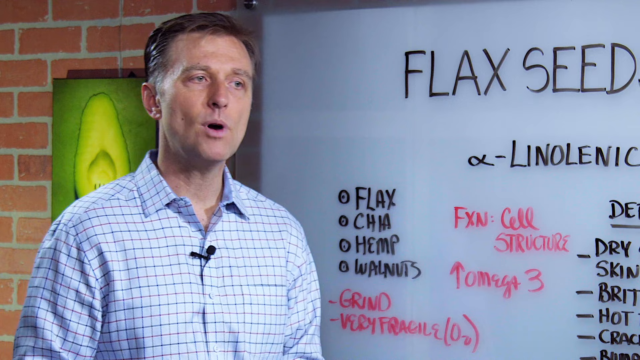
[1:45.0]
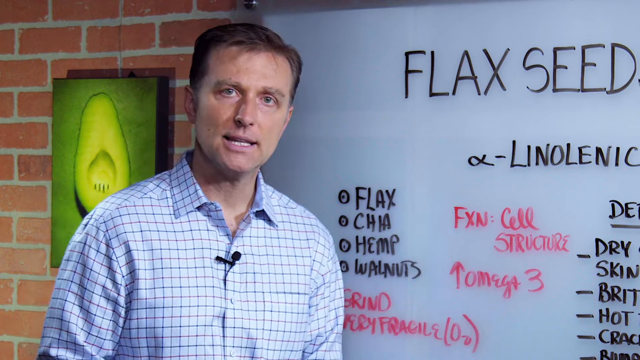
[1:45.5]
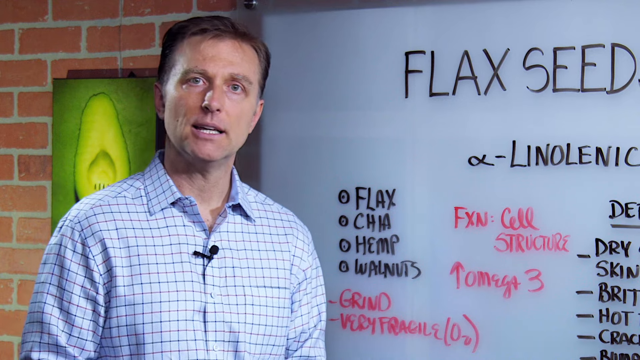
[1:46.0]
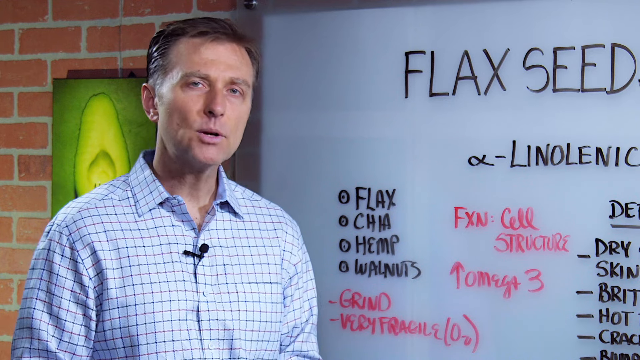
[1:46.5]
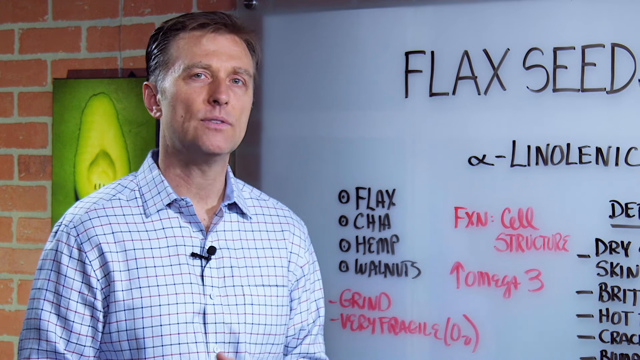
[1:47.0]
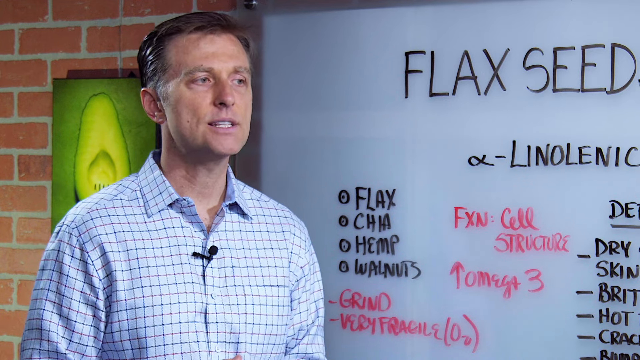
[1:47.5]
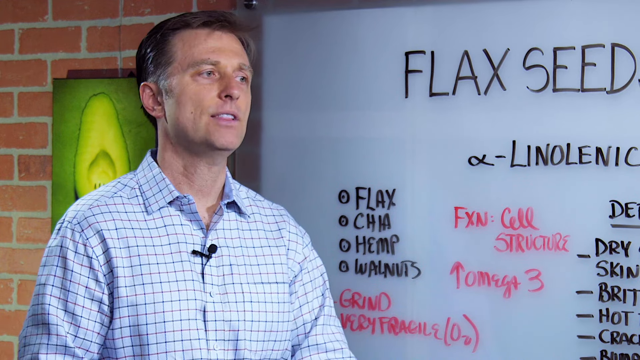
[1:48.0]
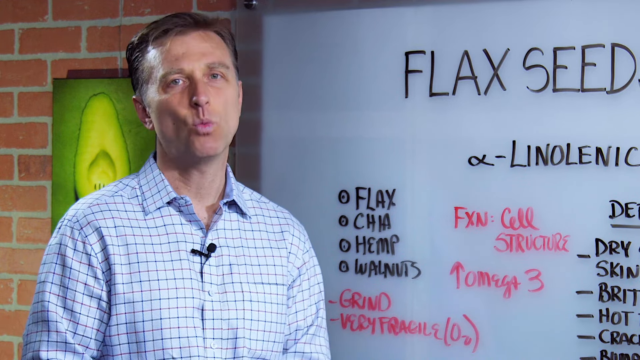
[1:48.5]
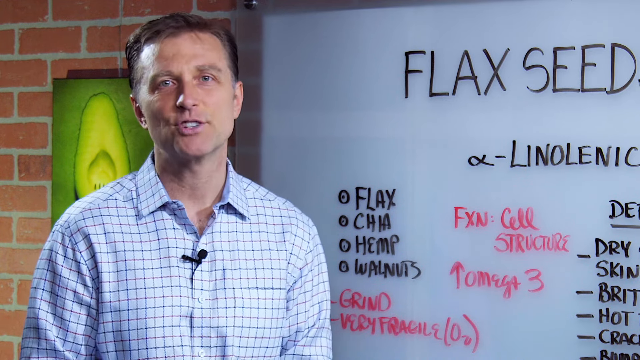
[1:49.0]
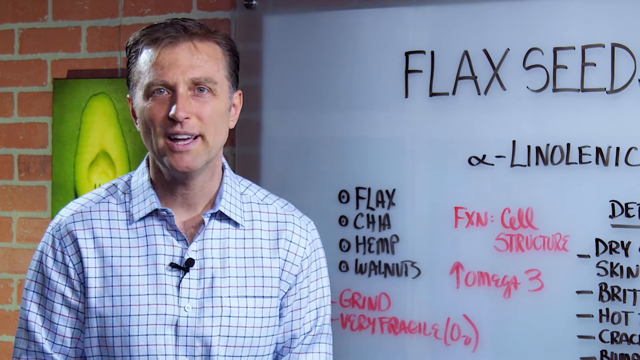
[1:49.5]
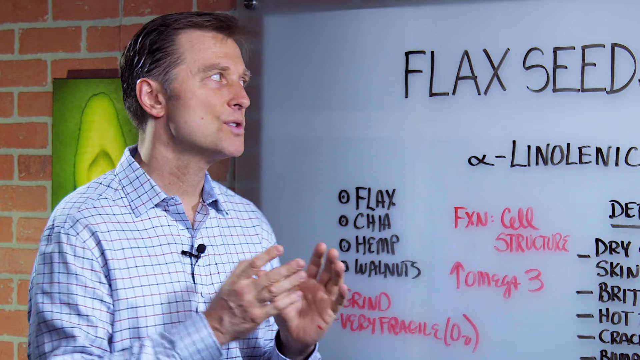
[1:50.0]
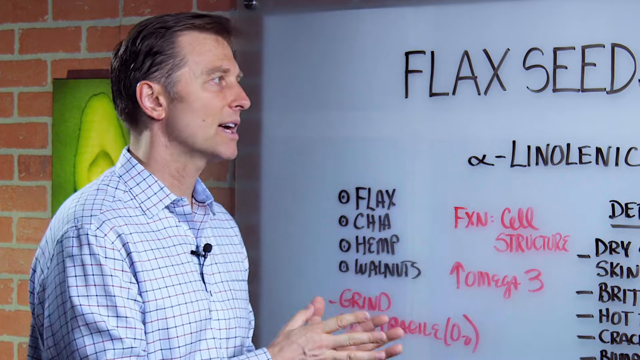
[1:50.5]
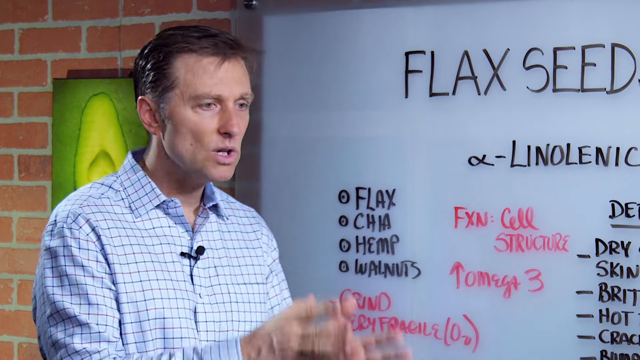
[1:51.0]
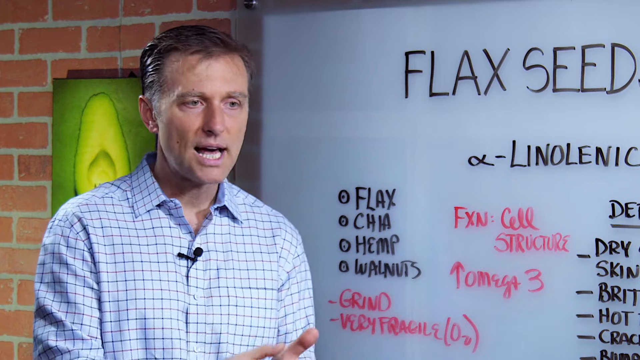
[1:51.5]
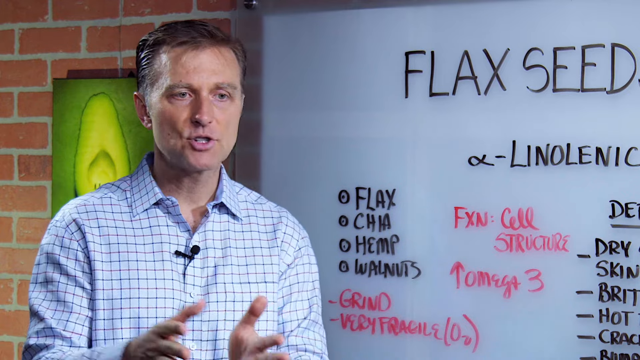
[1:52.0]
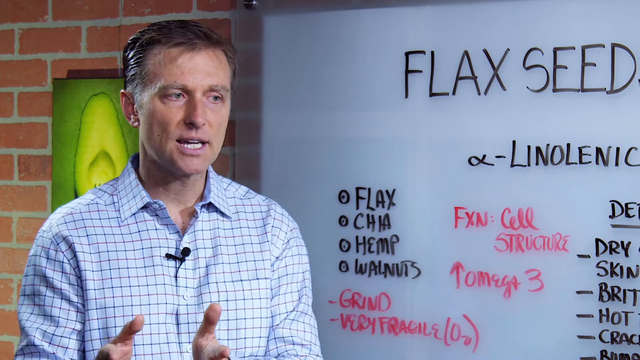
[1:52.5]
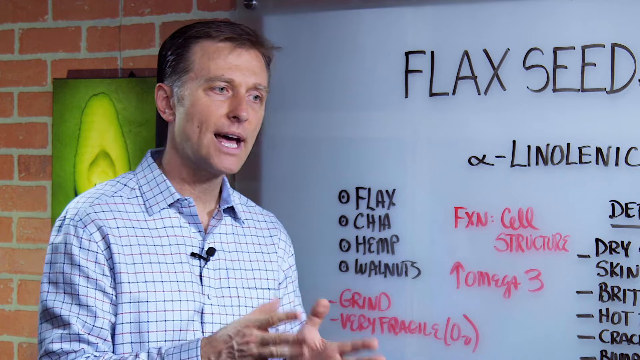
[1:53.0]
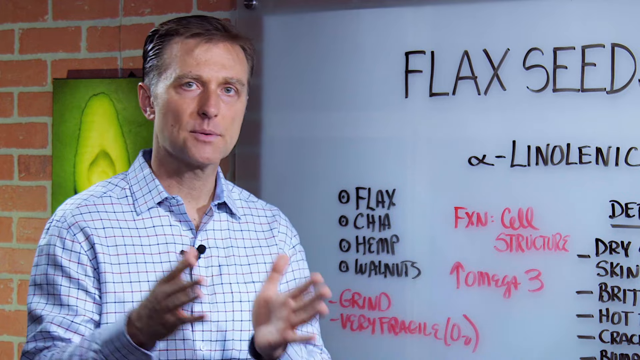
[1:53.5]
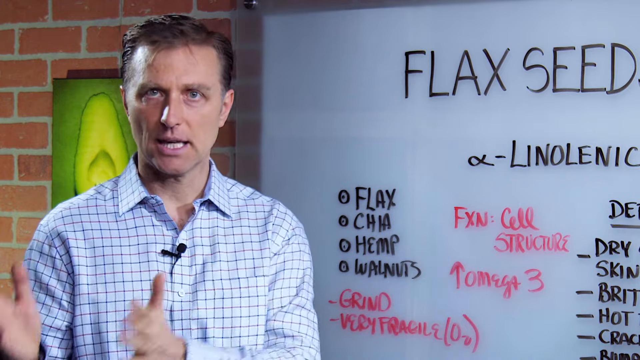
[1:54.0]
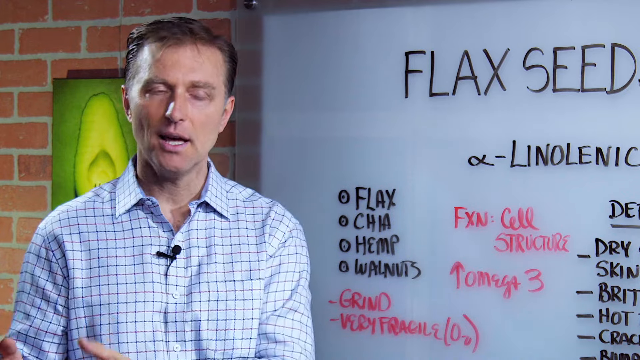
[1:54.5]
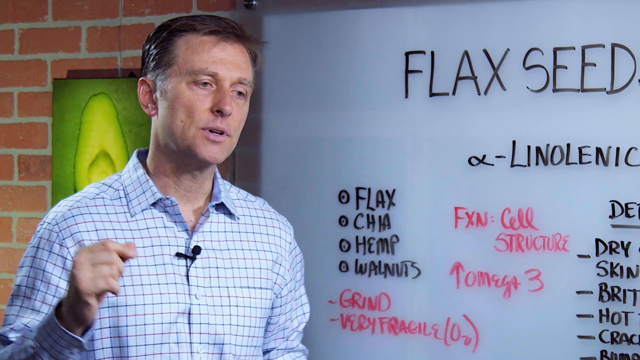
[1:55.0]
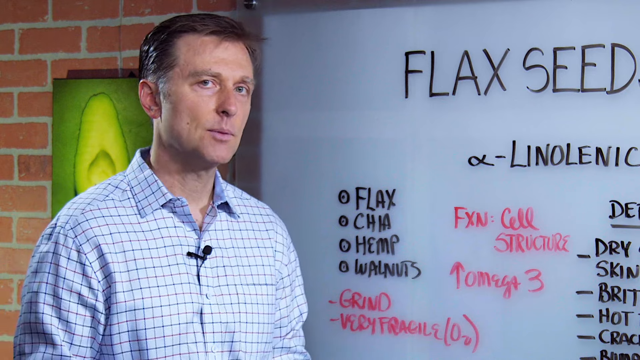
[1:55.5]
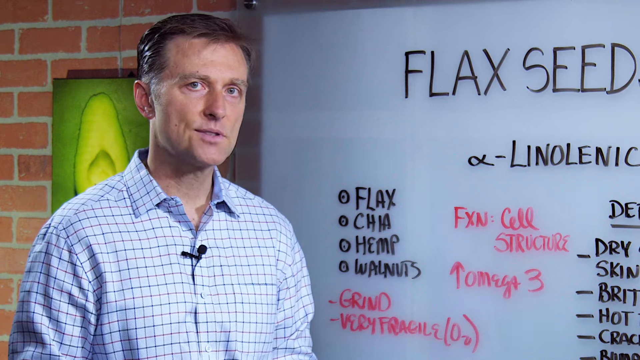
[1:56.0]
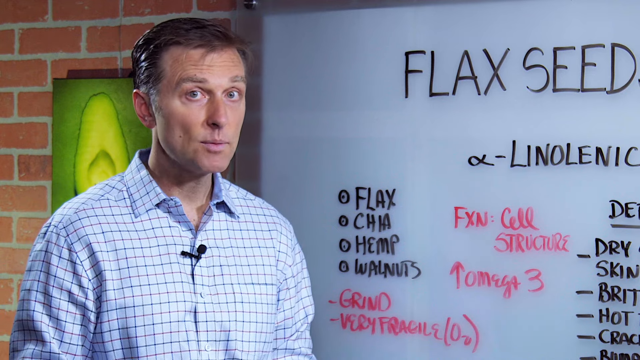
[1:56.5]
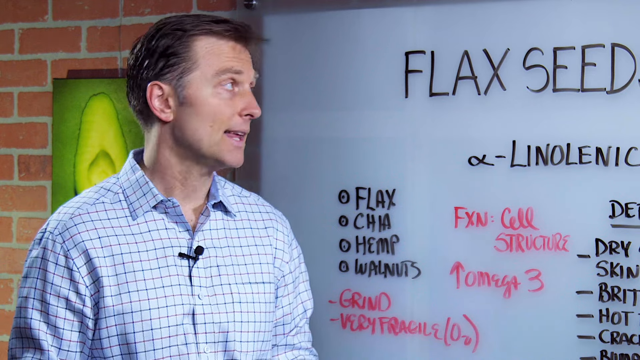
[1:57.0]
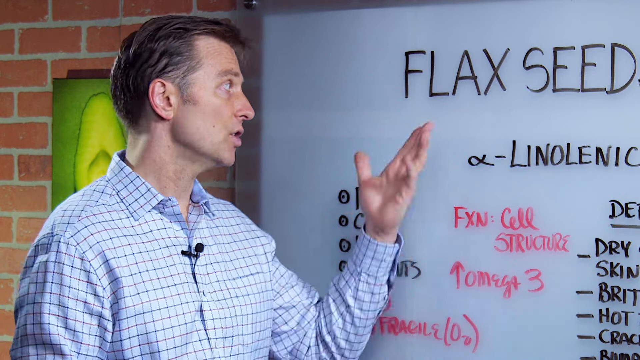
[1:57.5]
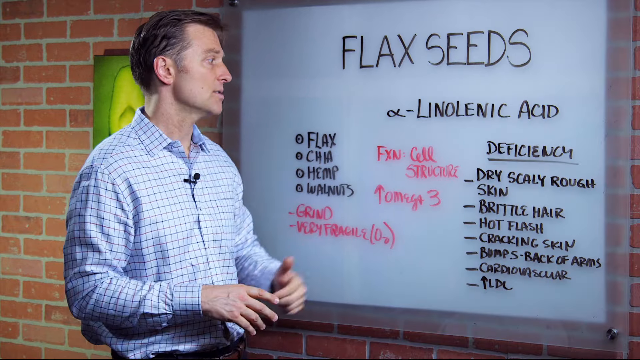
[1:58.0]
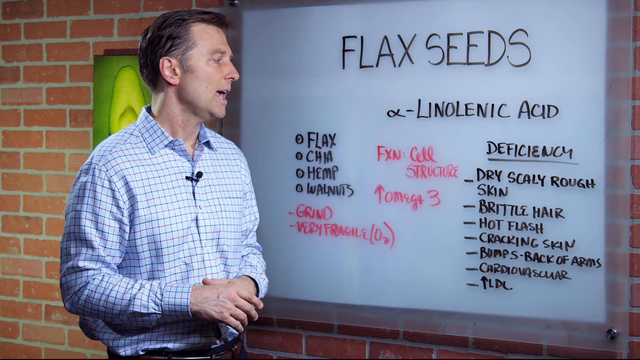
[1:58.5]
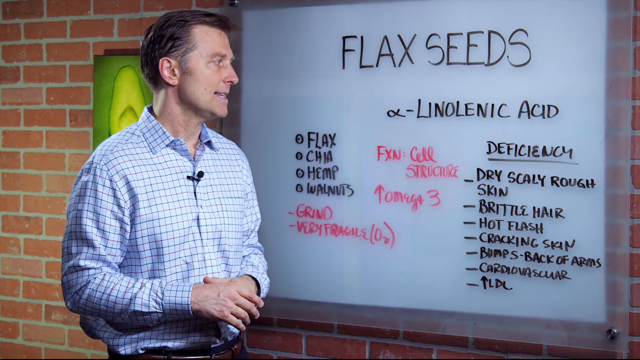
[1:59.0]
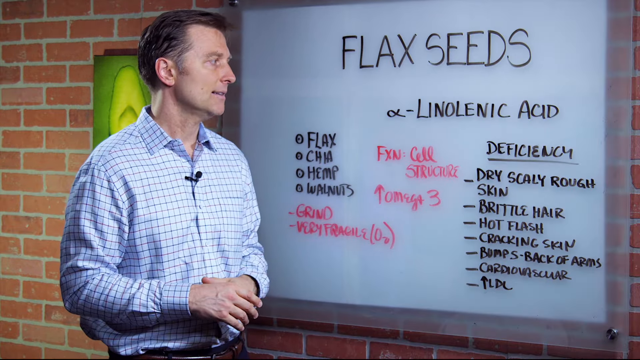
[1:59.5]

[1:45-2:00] A man presents a lesson on flaxseeds in a closeup that does not show the full whiteboard he is in front of. The video zooms back to a full view, then jumps again to showing three quarters of the screen, and it keeps jumping between a closeup and a more far-away view. "Flaxseed" is written in large letters, with smaller words underneath in black and some in pink. He speaks with his hands, holding them straight and moving them together from one side of his body to the other. He has a serious expression, rolls his eyes at one point, and moves his head as he speaks. He has black hair. Behind him, a photograph of a seed hangs on a red brick wall; the seed is cut in half, showing the inside with a small circular scooped-out part.